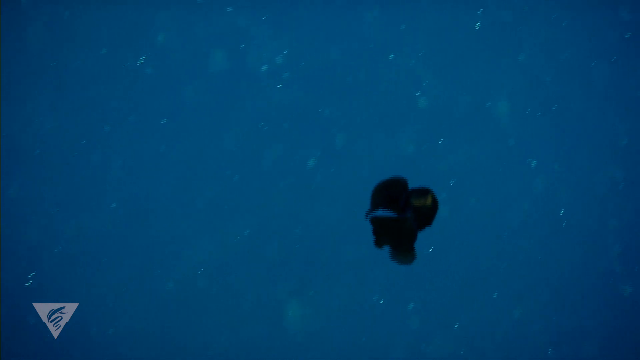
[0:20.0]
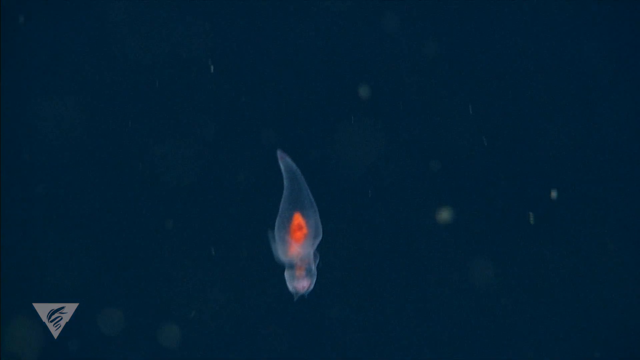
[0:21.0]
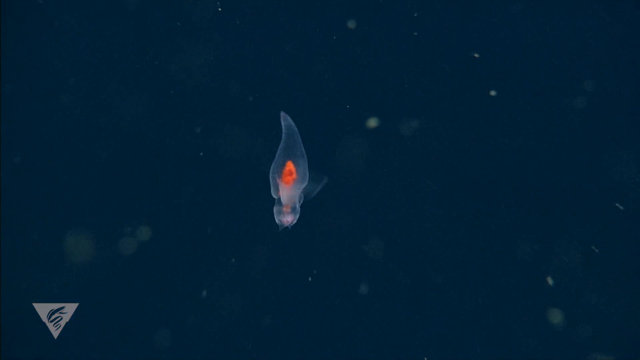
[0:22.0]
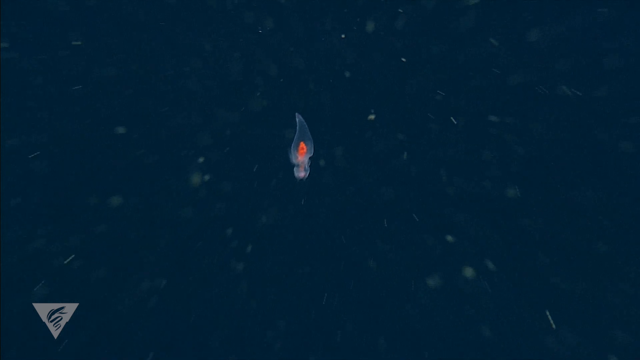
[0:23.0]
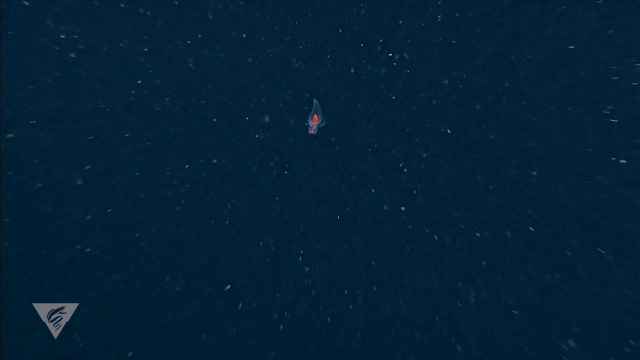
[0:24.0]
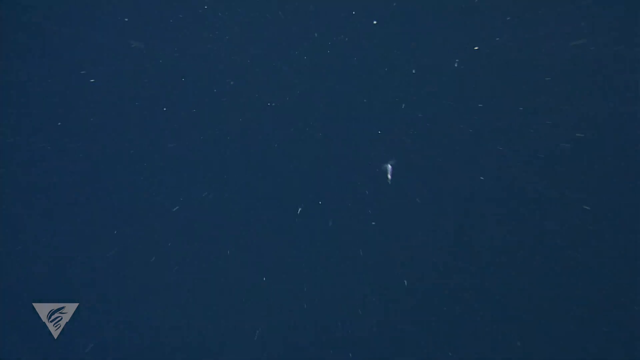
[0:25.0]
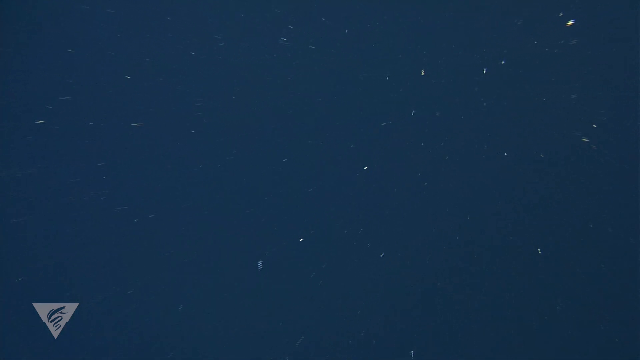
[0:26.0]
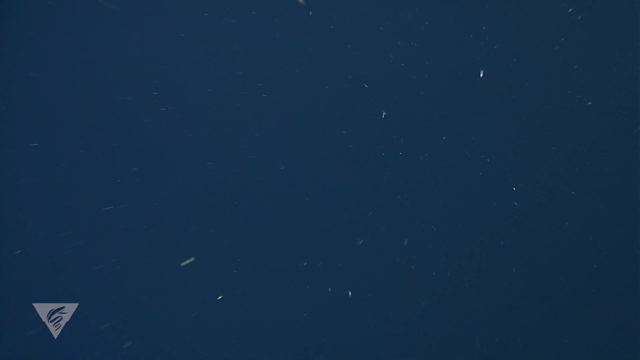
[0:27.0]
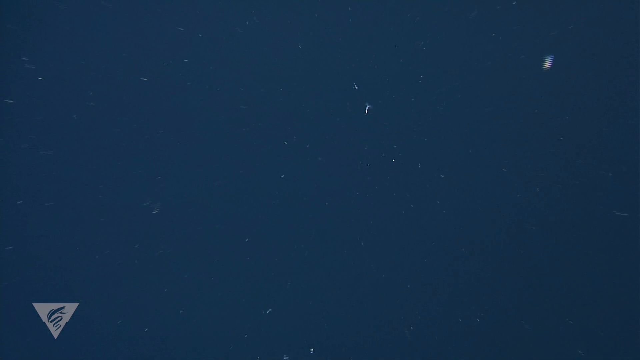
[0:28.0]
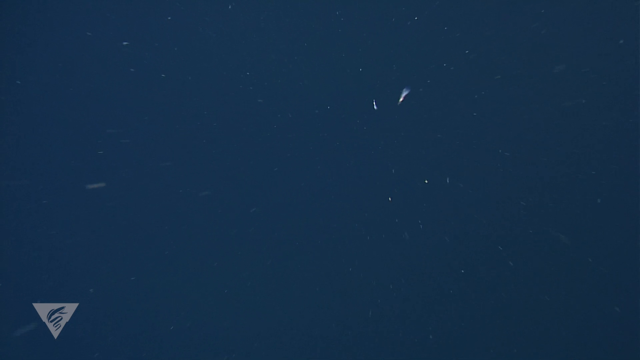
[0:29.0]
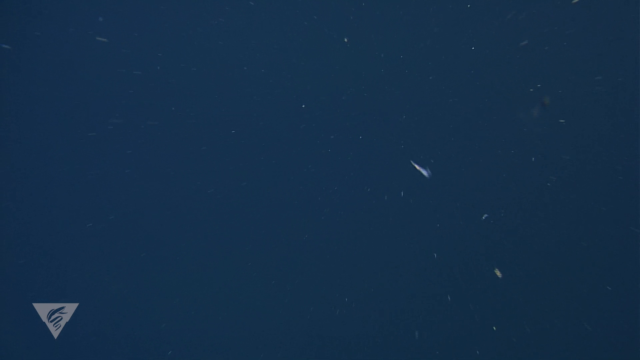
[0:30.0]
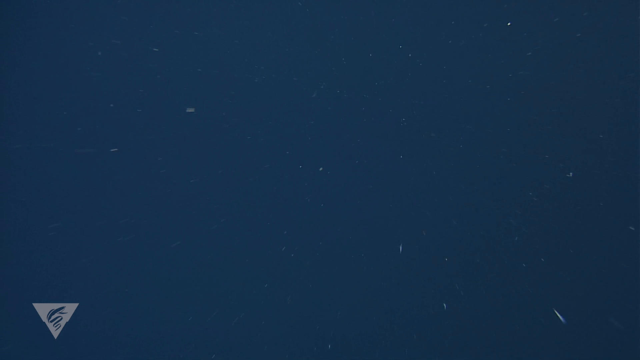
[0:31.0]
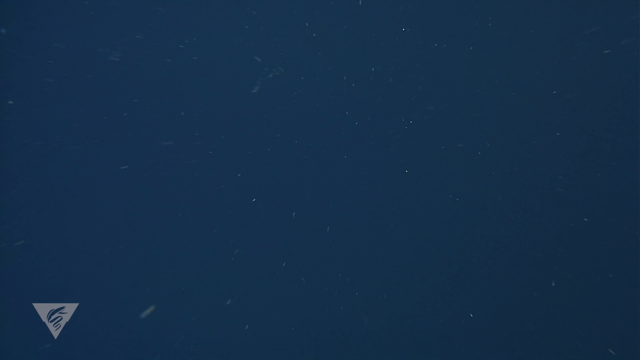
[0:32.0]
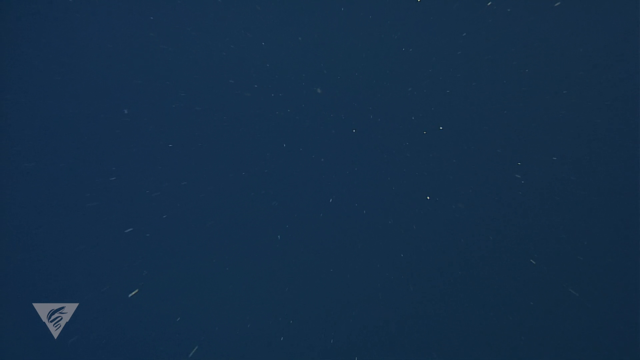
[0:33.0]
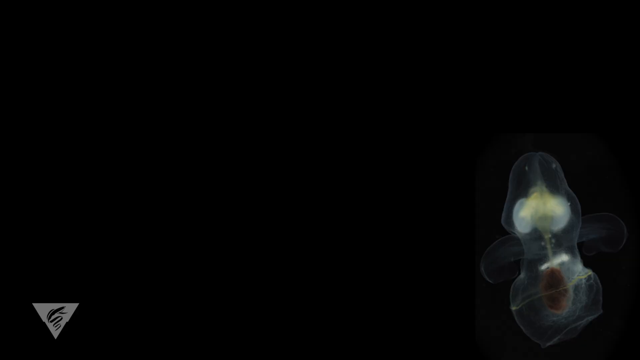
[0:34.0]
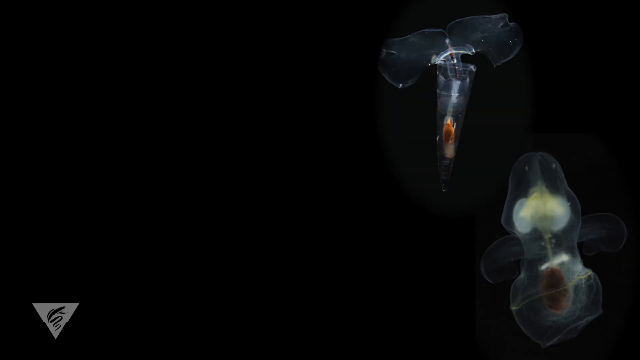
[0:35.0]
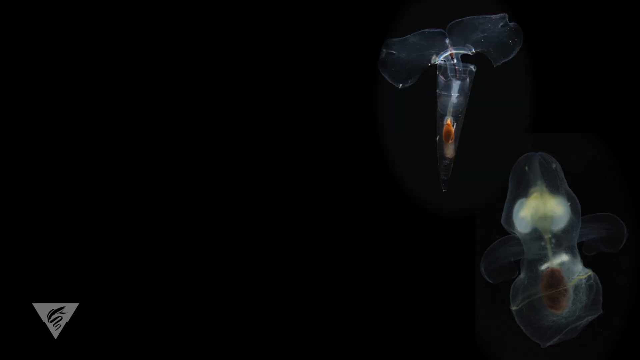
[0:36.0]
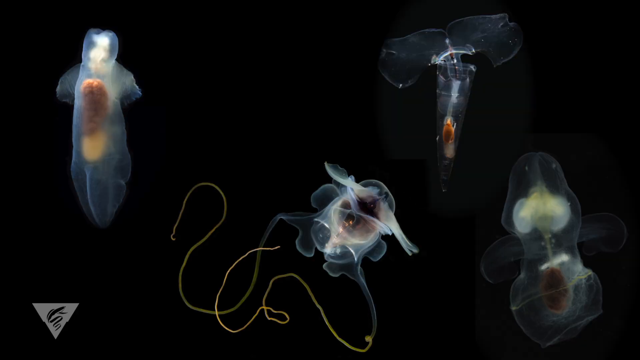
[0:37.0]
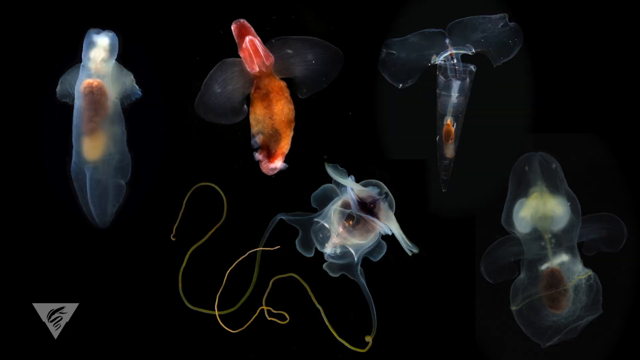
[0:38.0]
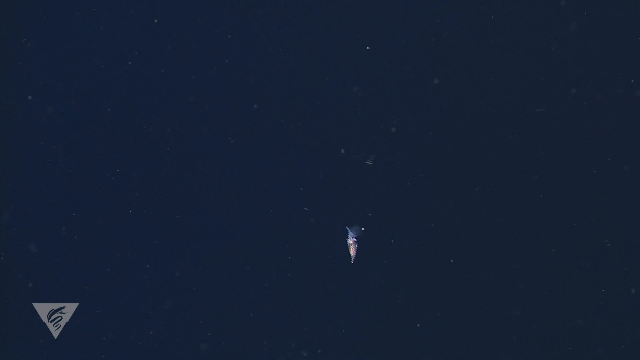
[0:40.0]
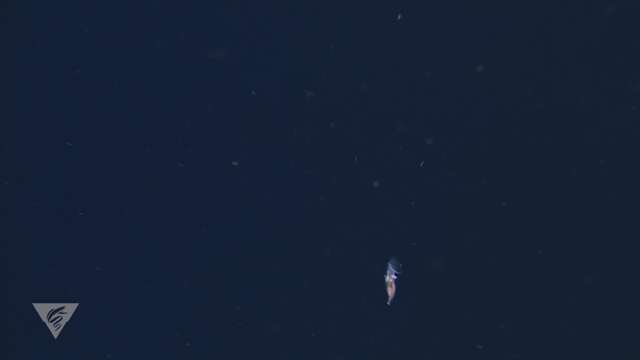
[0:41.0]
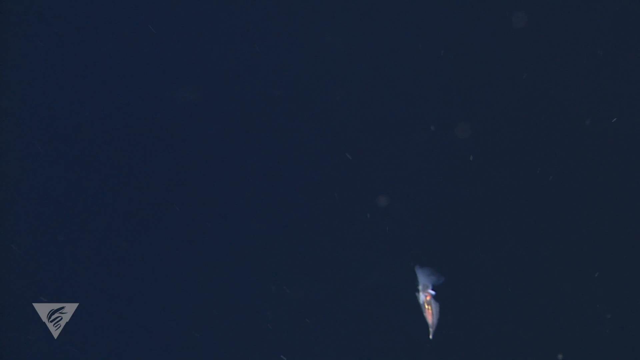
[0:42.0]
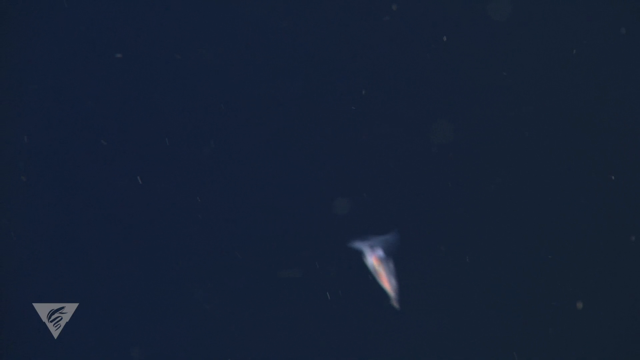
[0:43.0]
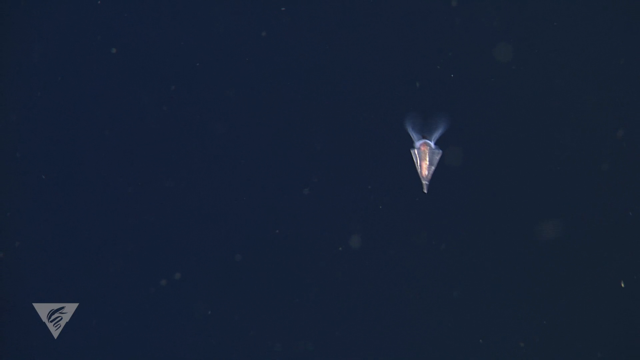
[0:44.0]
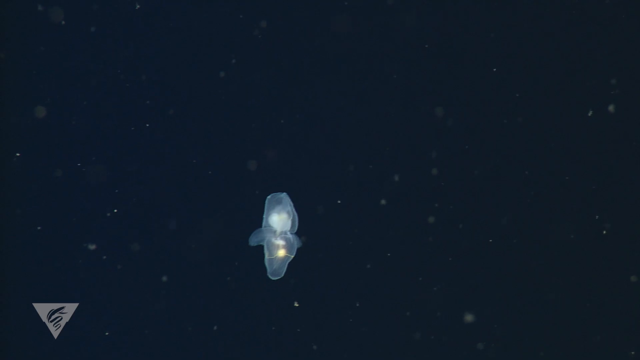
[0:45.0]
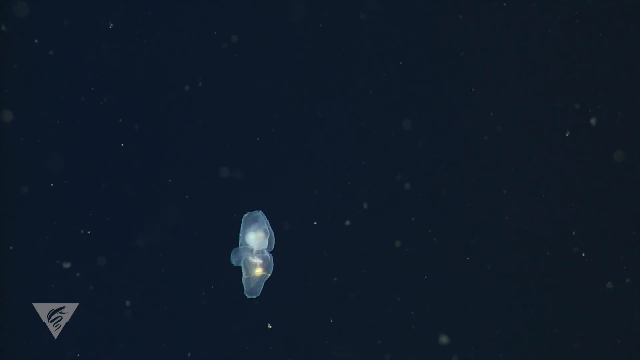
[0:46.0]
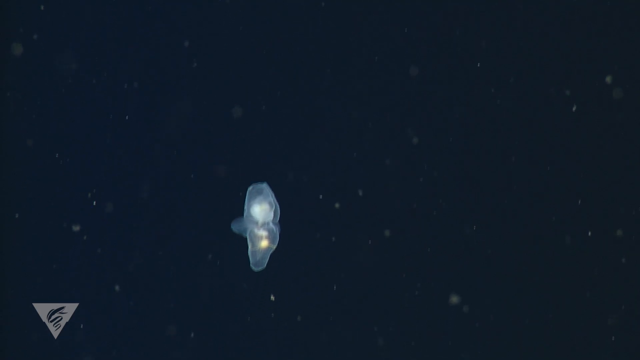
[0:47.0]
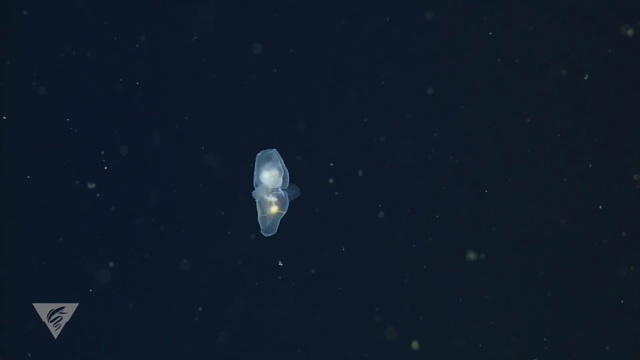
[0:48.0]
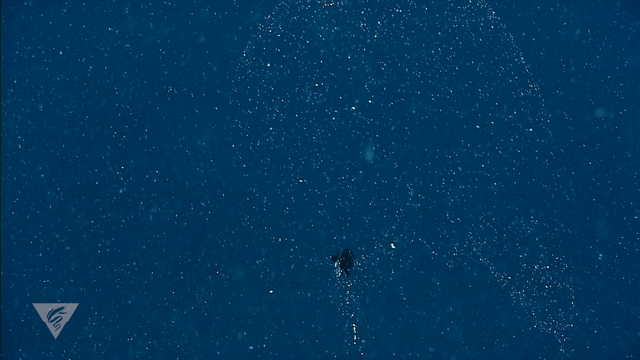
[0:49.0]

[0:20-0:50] A pteropod propels itself through the water of the sea using the small flippers on the sides of its body. Next come light-colored pteropods of different sizes, shapes and colors. Several of them, perhaps most, look translucent and possibly even bioluminescent. The pteropods propel and direct themselves through the ocean water with the flippers on the sides of their bodies. In one scene there are several different types of pteropods, with five on the screen at one point. All of them have translucent to semi-translucent bodies with the organs visible inside, and some of them may also be bioluminescent, or at least partially bioluminescent.